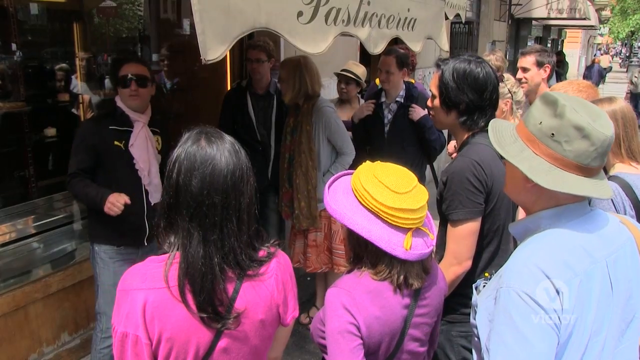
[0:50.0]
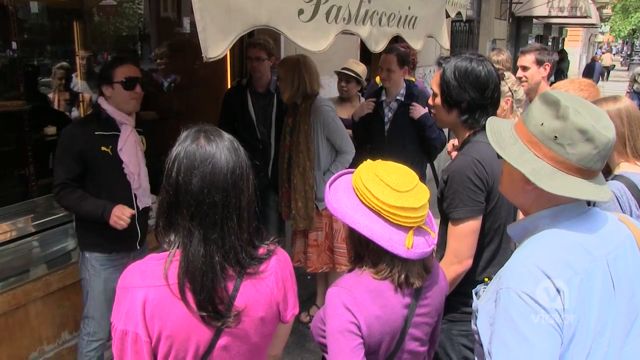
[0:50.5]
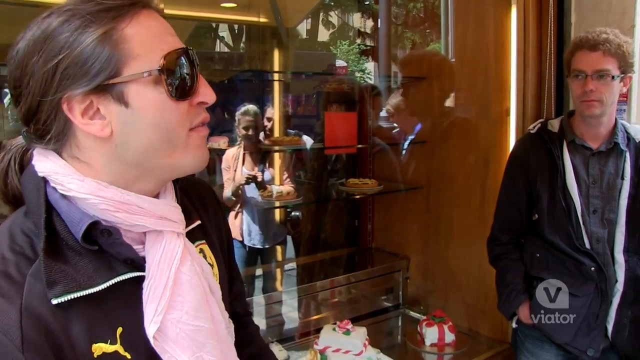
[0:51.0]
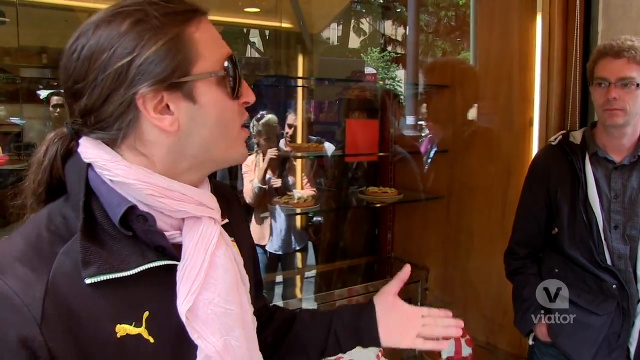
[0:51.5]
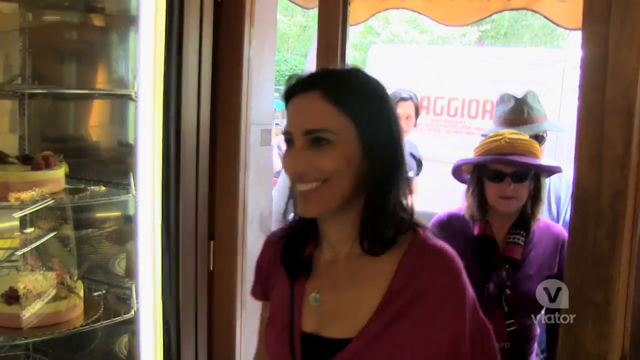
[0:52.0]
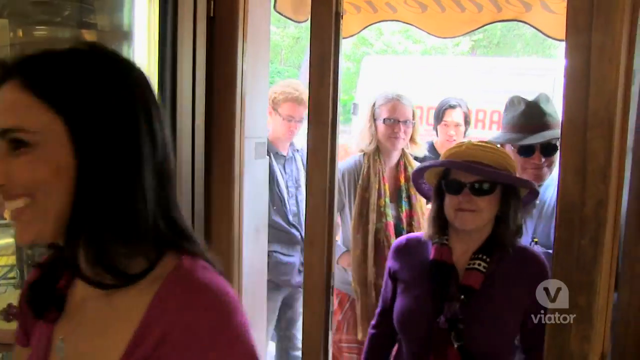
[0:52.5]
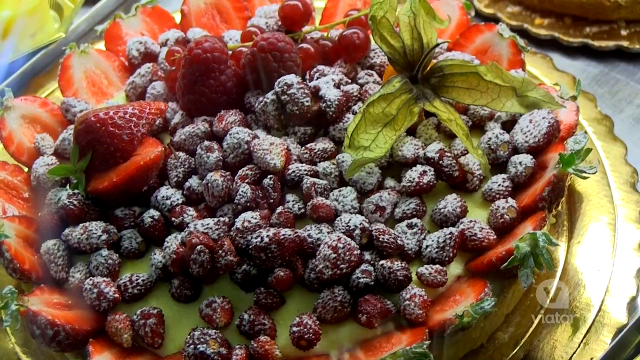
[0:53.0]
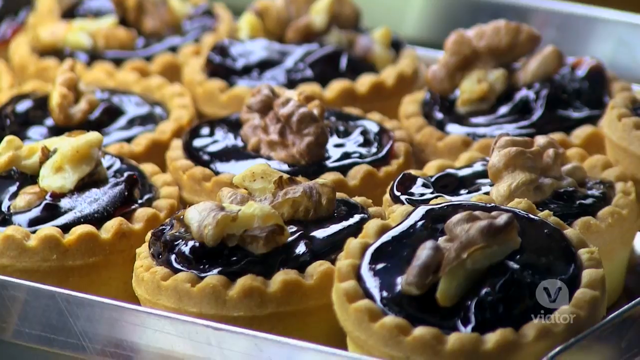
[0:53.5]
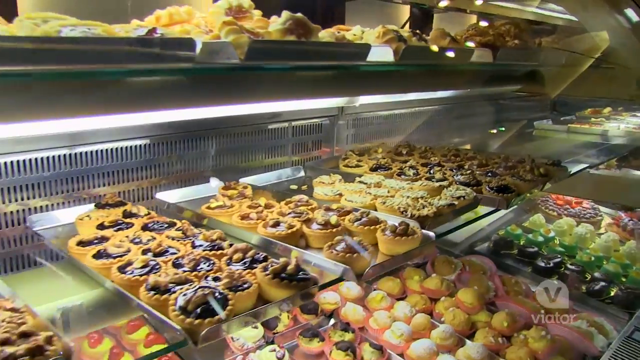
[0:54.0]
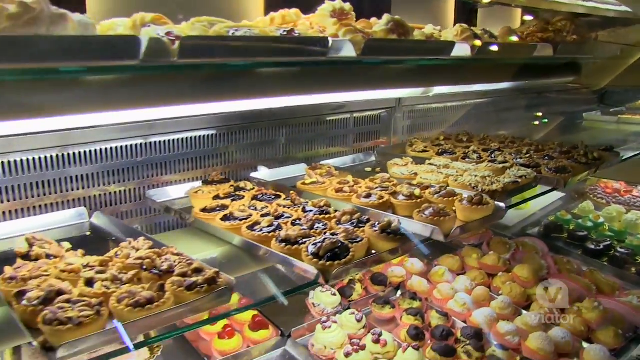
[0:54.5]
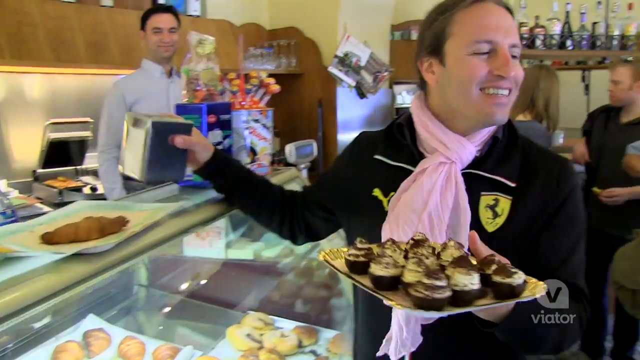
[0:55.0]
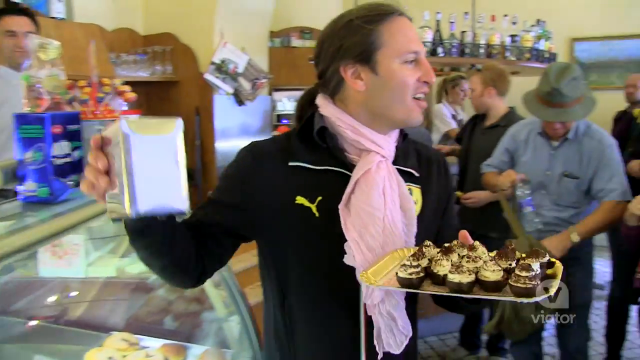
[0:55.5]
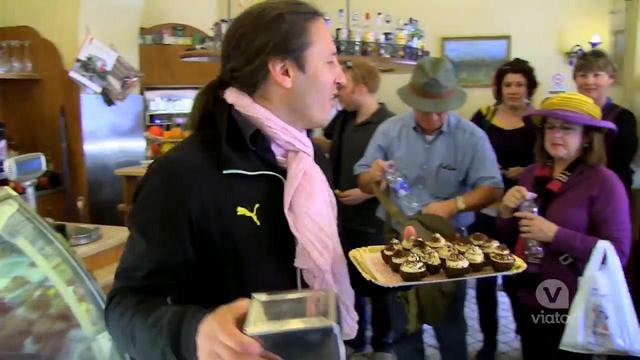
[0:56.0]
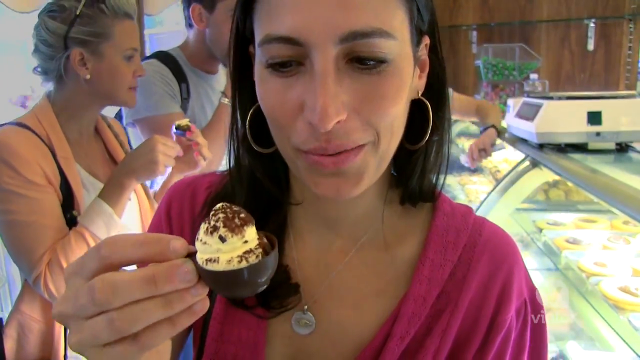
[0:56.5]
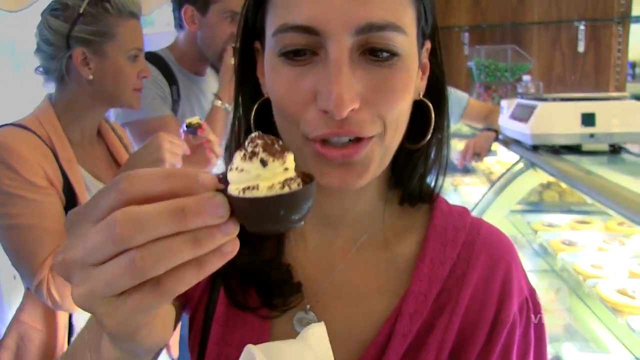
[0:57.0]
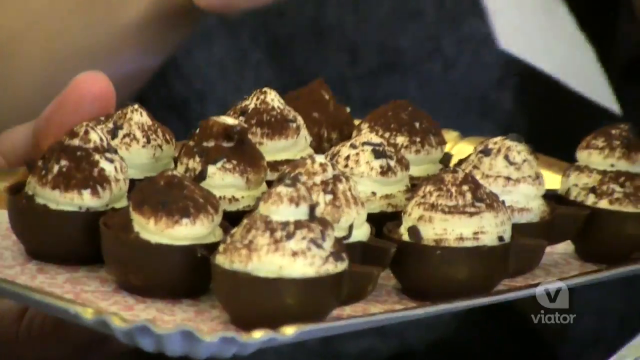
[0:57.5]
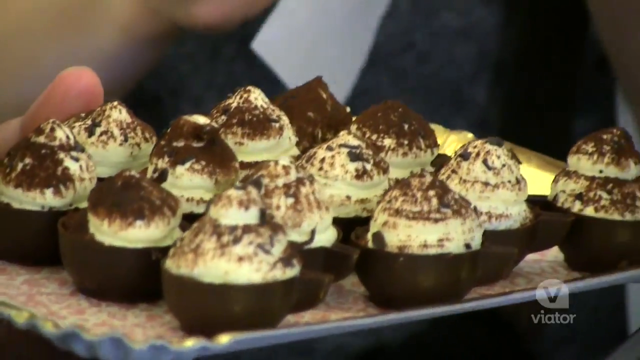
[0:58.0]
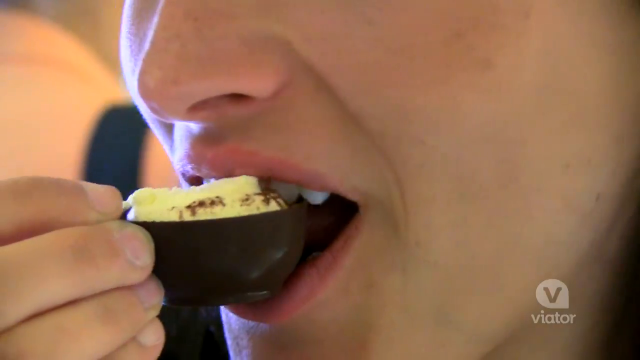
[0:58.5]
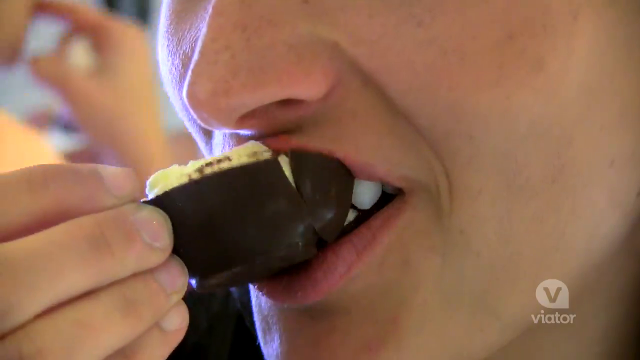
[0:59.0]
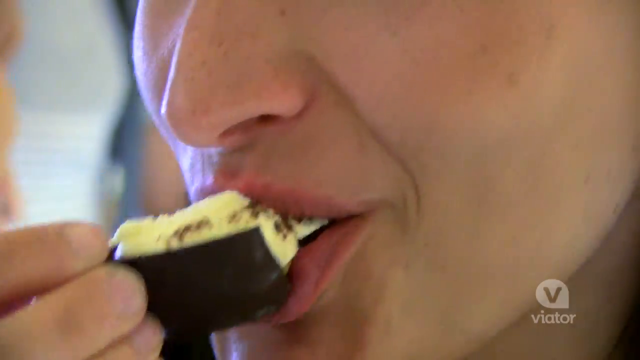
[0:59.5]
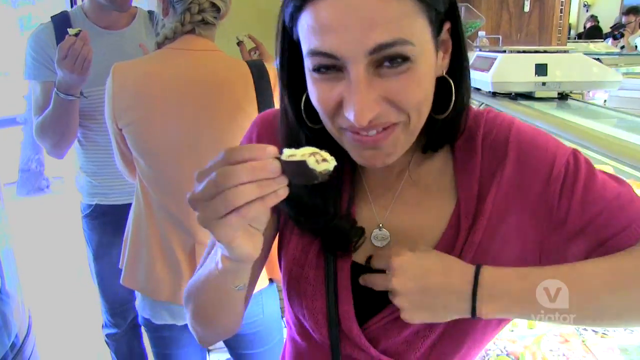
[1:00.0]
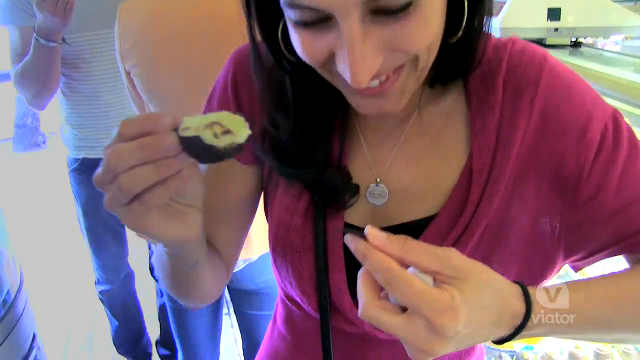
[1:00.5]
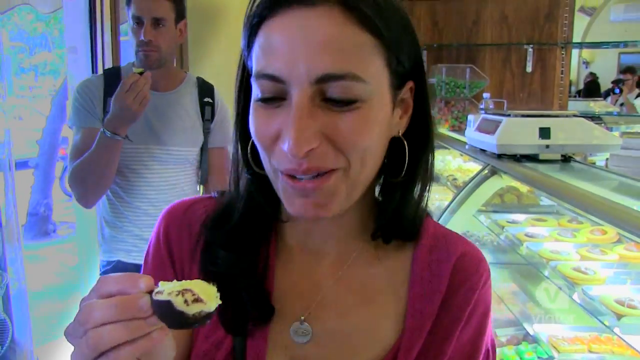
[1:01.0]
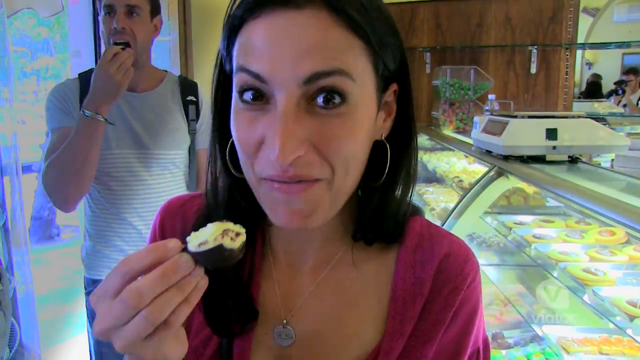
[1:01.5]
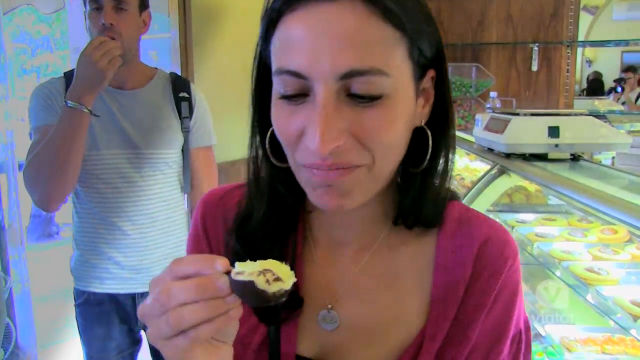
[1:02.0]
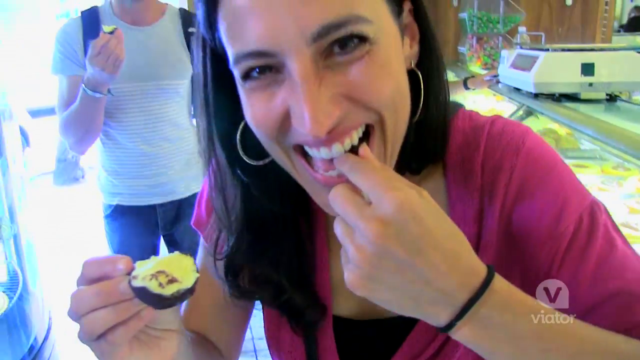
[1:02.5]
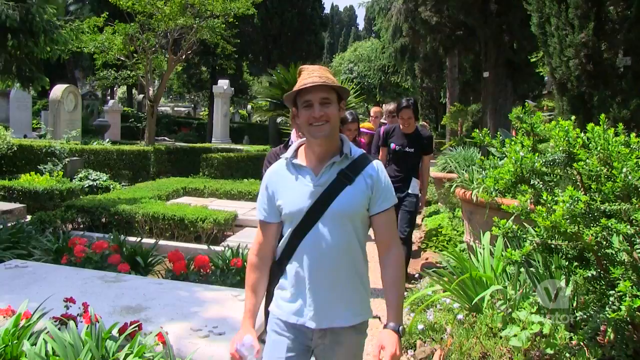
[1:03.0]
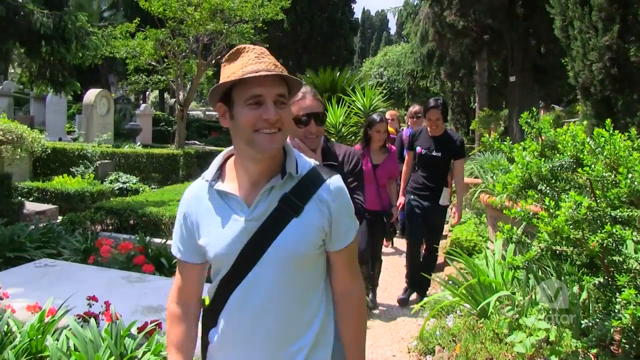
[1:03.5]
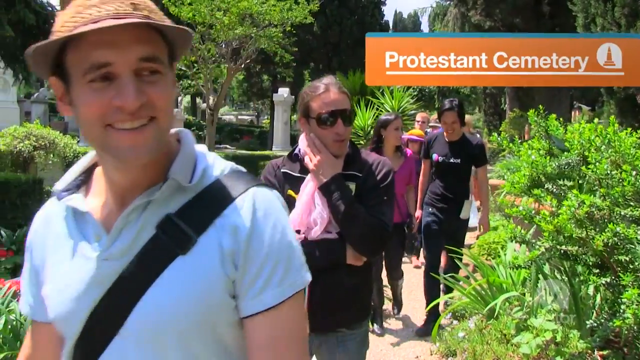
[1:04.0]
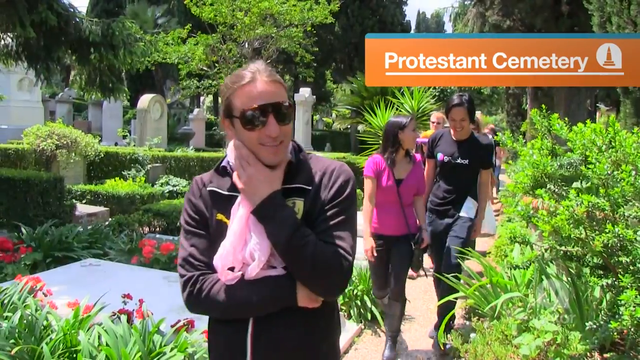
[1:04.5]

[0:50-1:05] People are gathered around a man who is talking, possibly telling them about the tarts, other desserts and small bites at his booth. He passes around chocolate tarts that look like a milk chocolate shell with a cream filling inside. A woman in a hot pink v-neck shirt with a black tank top or camisole under it eats a chocolate tart with a white filling that looks like vanilla or some sort of cream; as she takes a bite, the tart breaks apart and part of it falls down the inside front of her shirt. Refrigerated cases hold other tarts, some appearing to be fruit tarts, among many other types. A man talking to the customers wears sunglasses and has long dark hair. People smile and enjoy taste testing the samples.